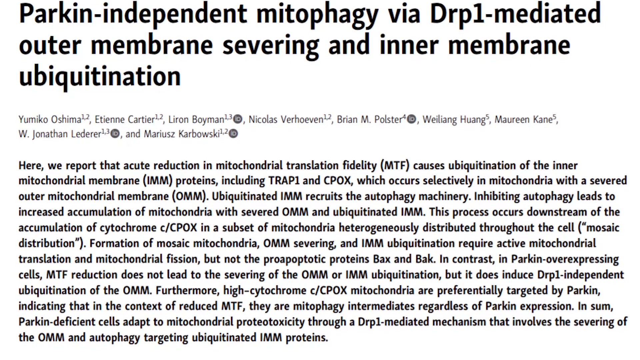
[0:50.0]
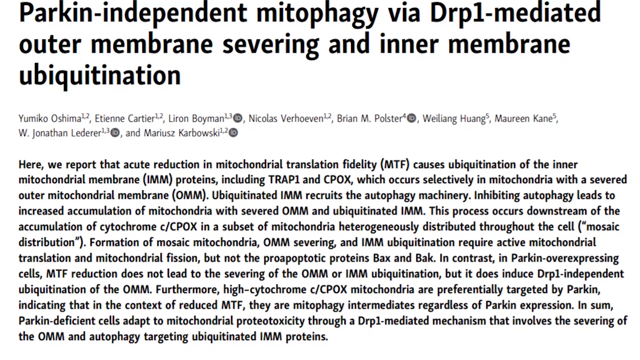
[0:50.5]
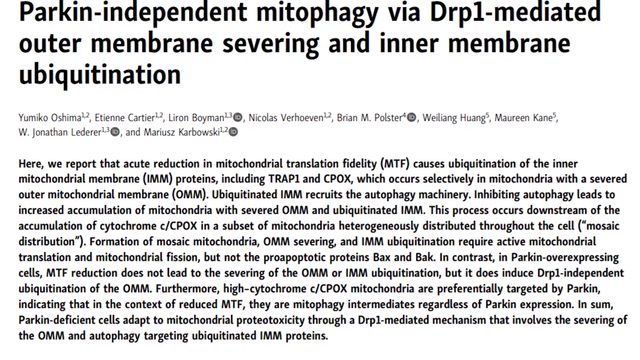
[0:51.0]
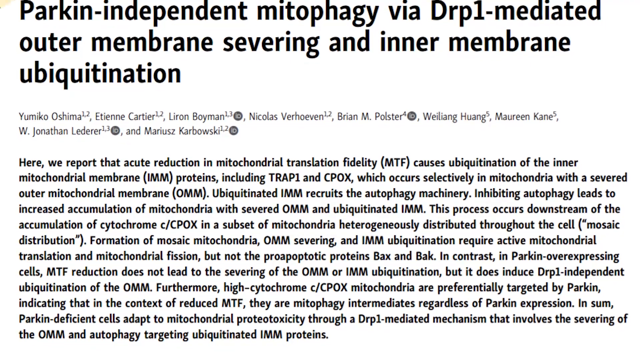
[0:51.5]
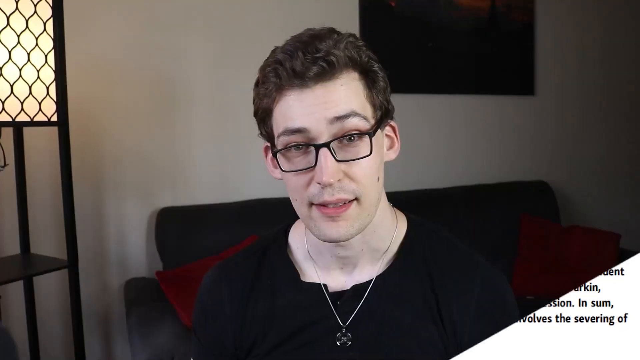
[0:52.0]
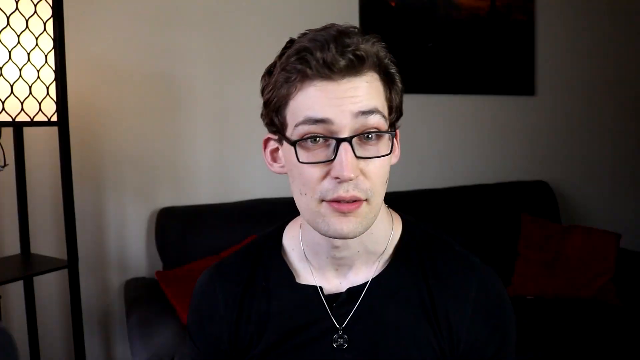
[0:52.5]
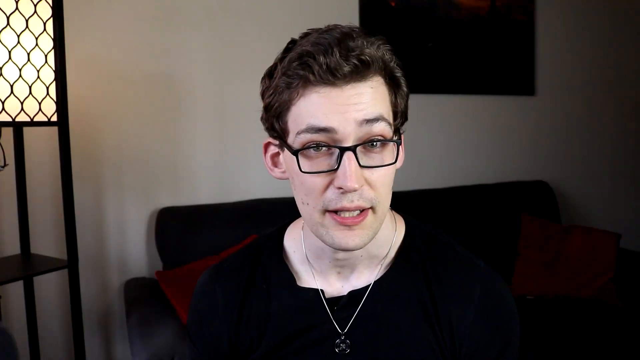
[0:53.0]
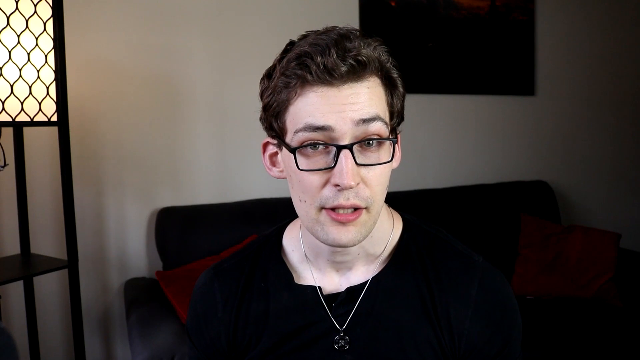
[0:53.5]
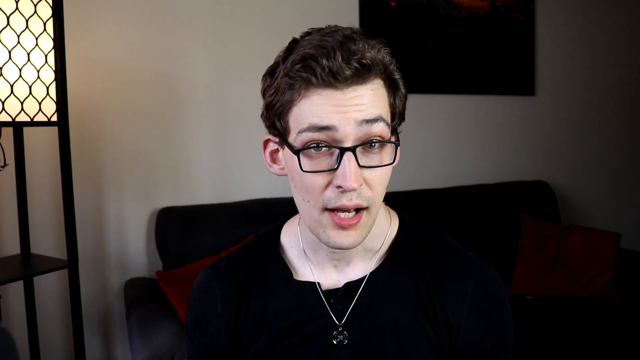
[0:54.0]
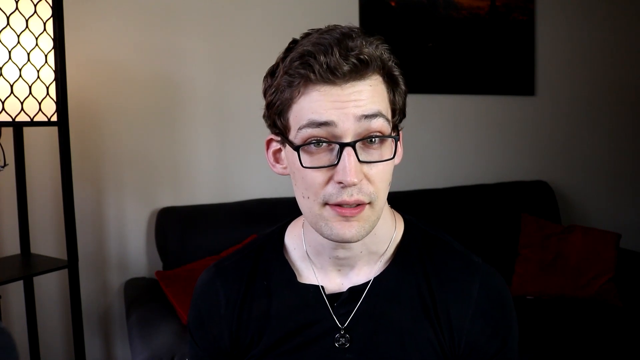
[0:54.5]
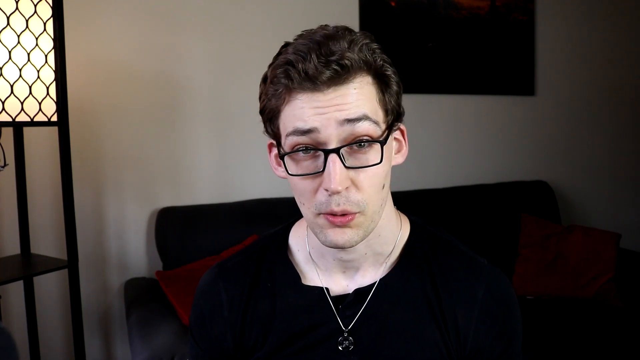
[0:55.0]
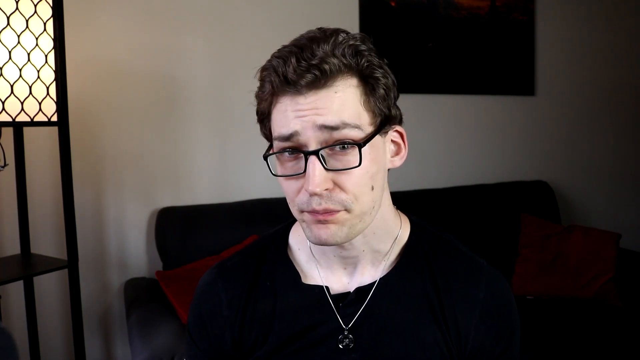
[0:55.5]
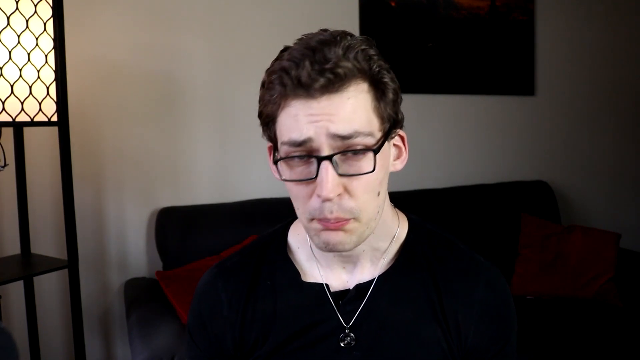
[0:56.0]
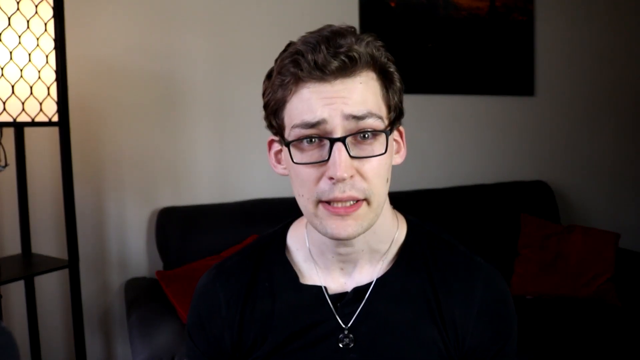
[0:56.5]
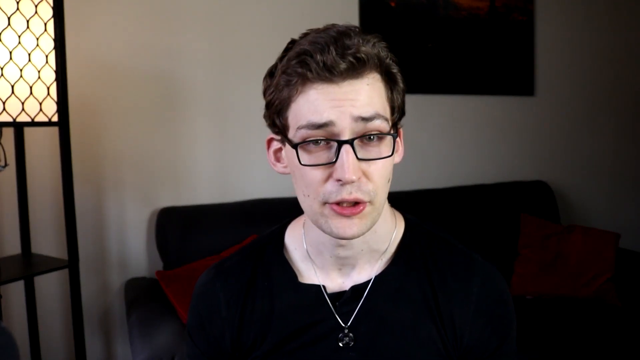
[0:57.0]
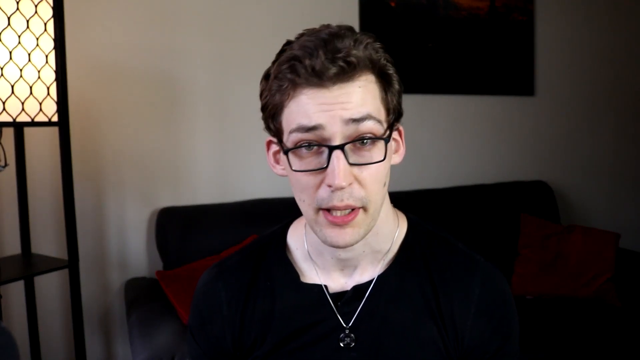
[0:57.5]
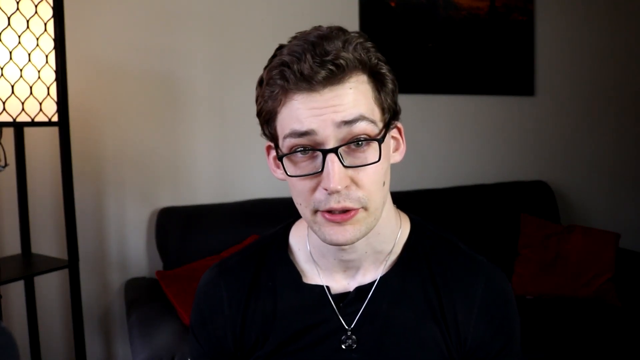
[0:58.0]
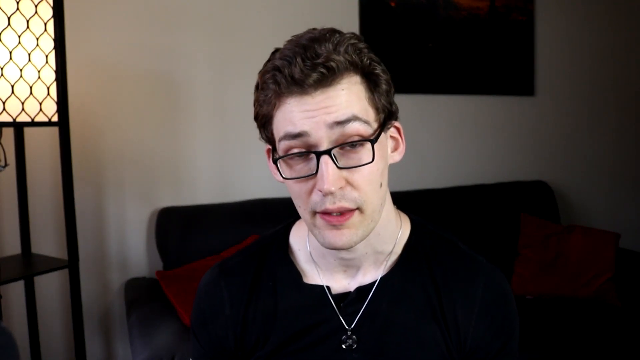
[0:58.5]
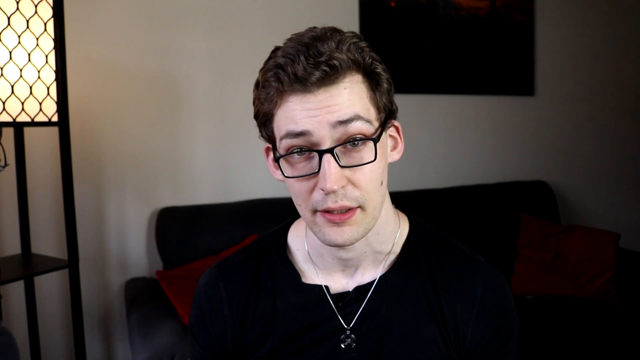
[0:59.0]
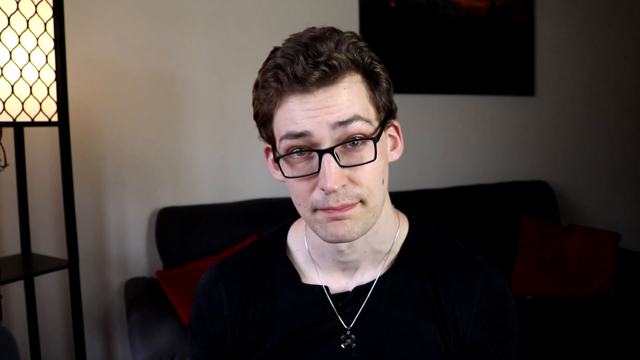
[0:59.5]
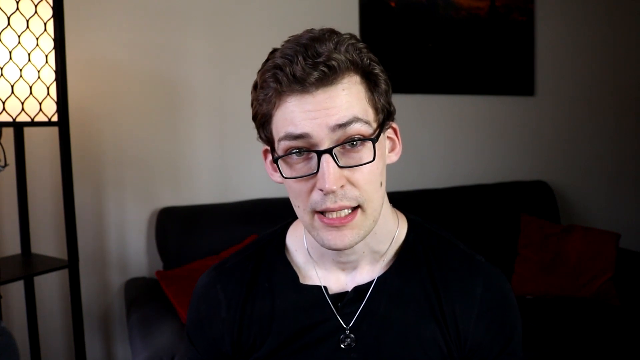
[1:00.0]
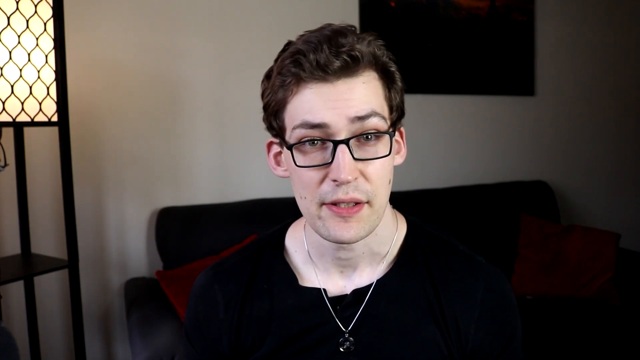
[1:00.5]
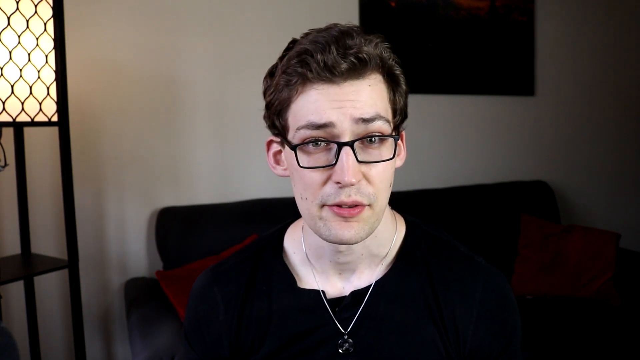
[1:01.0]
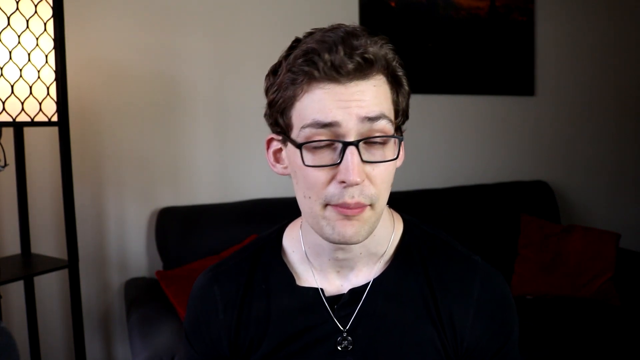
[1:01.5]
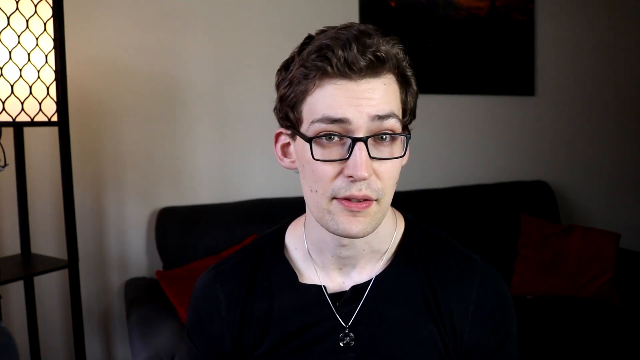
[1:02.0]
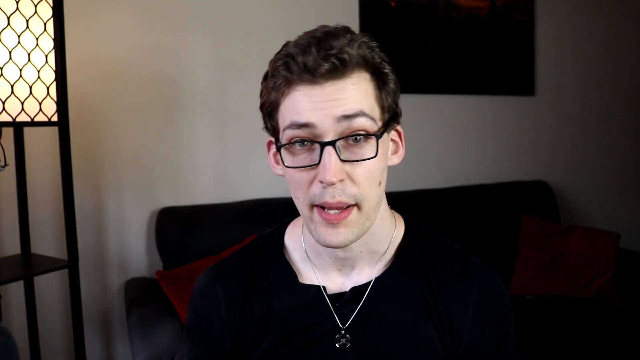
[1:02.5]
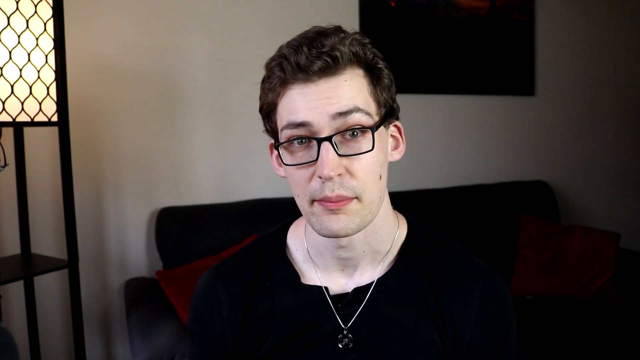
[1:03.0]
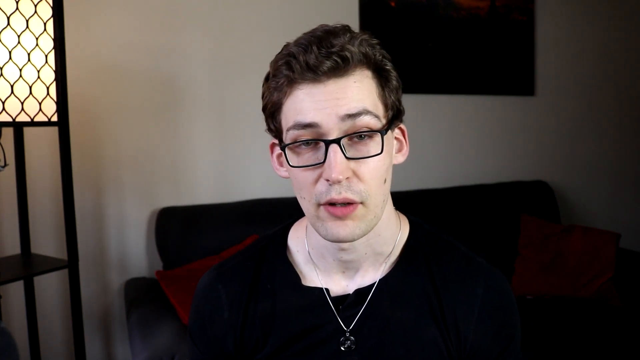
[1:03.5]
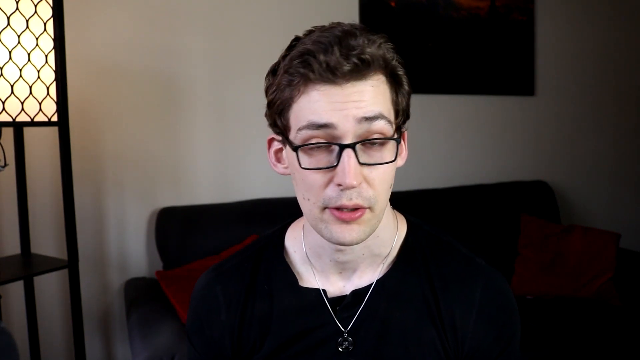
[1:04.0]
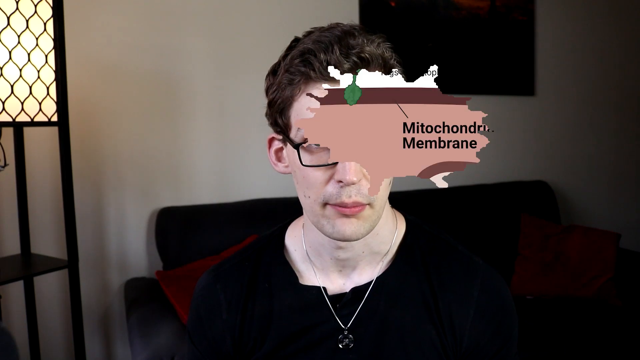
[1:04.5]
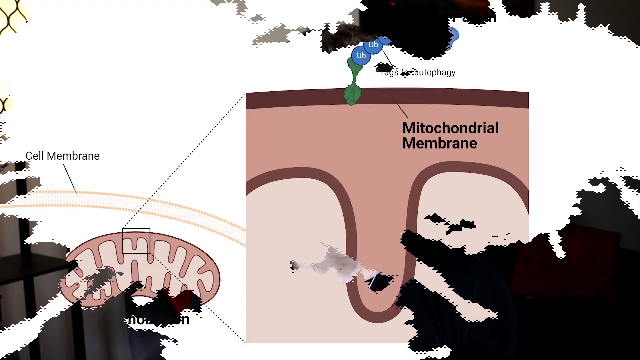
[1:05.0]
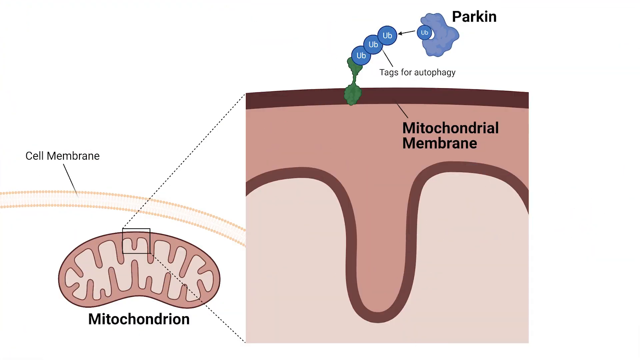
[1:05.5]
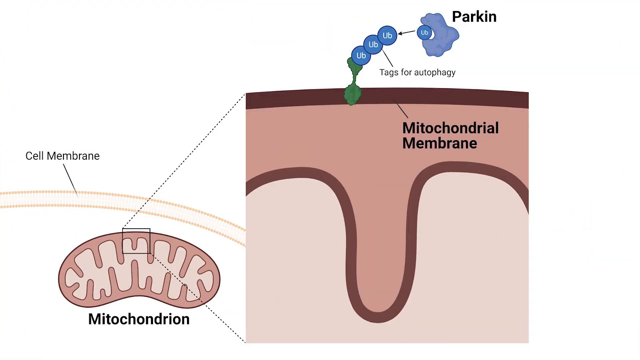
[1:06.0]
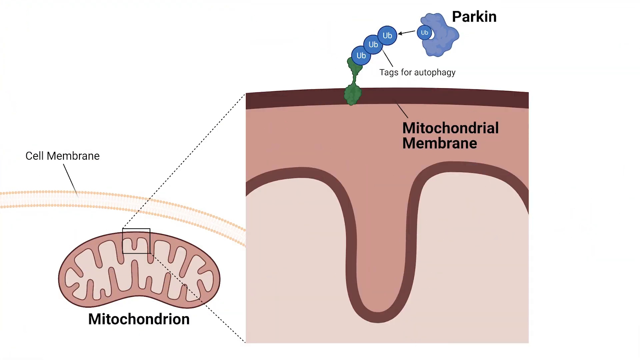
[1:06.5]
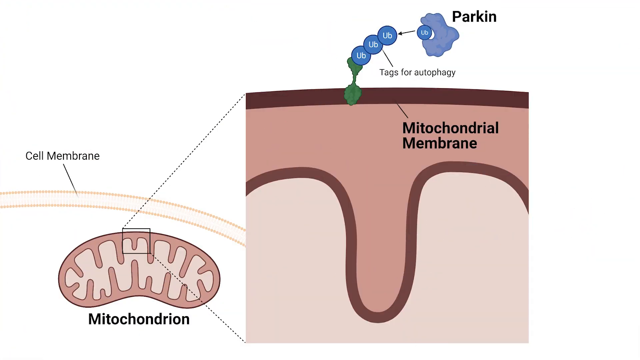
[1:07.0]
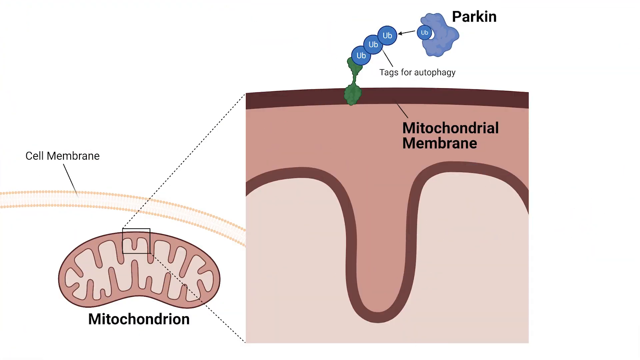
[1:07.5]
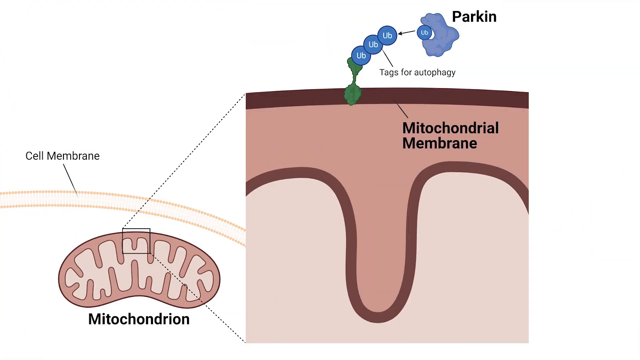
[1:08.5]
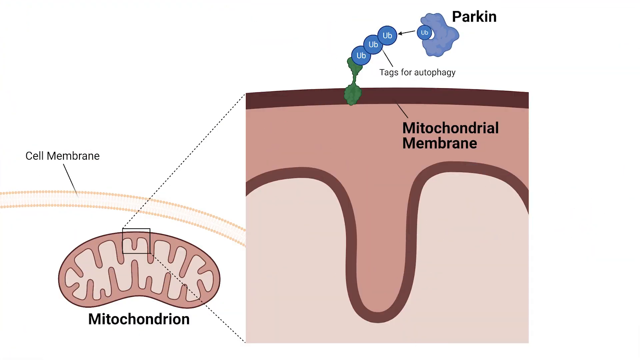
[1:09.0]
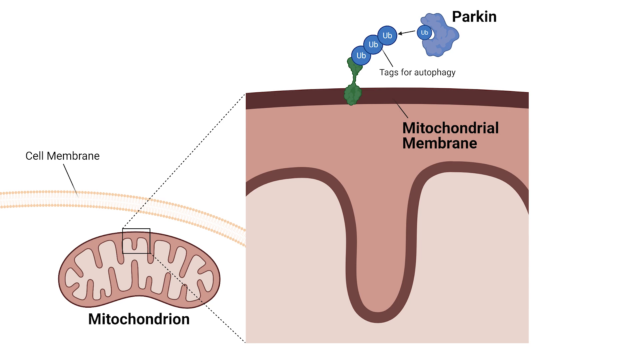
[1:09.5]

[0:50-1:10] The article gives way to the contributor, Nicholas Verhoeven, back in what looks to be a living room with a black couch, red pillows, a black painting, a lamp giving a yellow glow, and a black frame with a stand that looks like a table or nightstand. The video then moves to a graphic showing the Parkin process for autophagy, with a visual depiction of the mitochondrial membrane and the cell membrane.